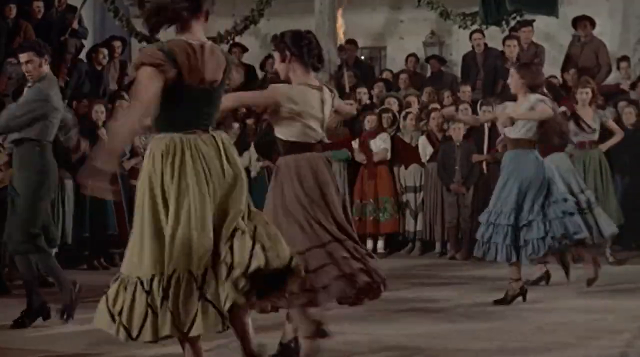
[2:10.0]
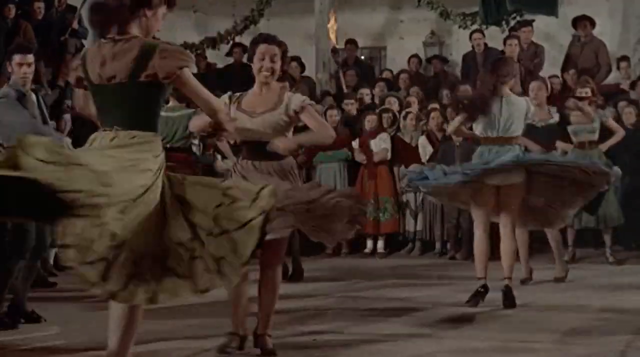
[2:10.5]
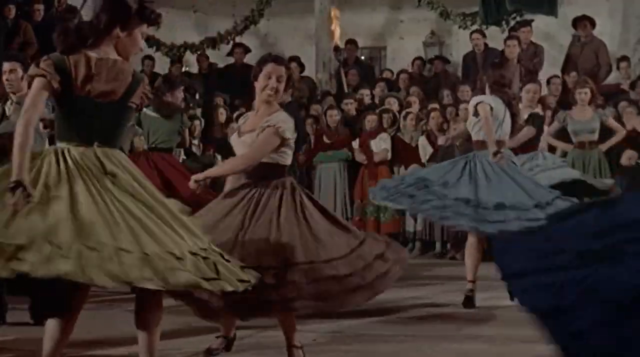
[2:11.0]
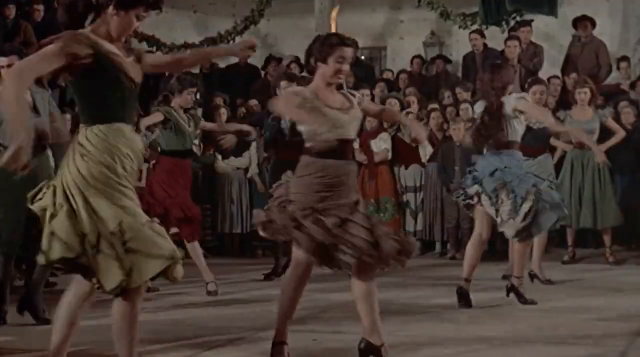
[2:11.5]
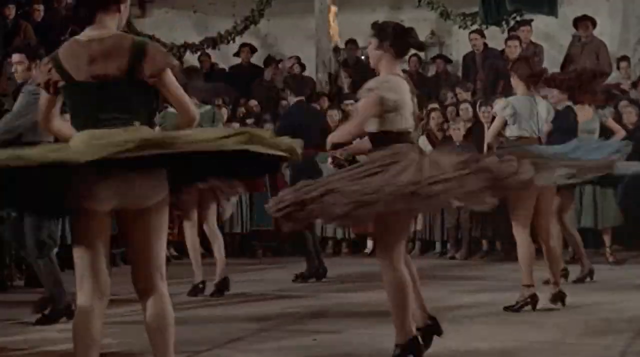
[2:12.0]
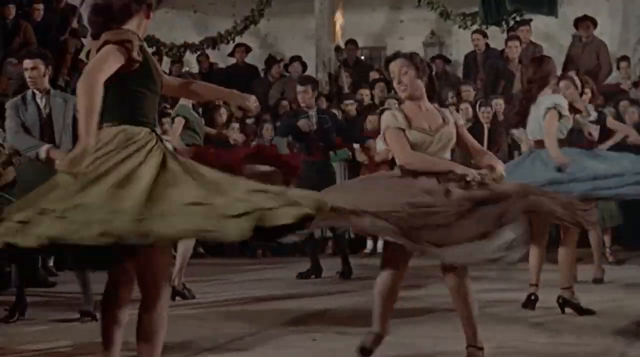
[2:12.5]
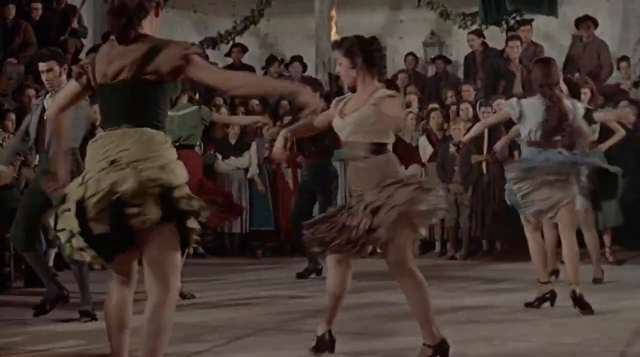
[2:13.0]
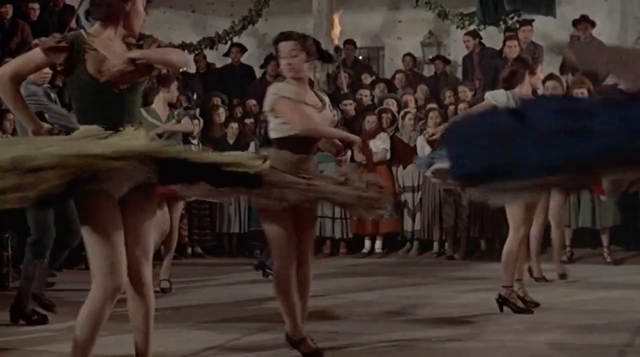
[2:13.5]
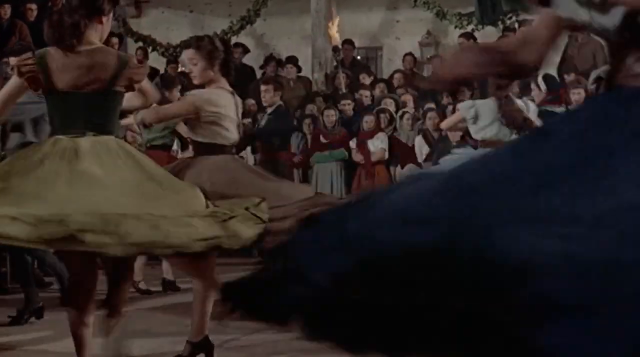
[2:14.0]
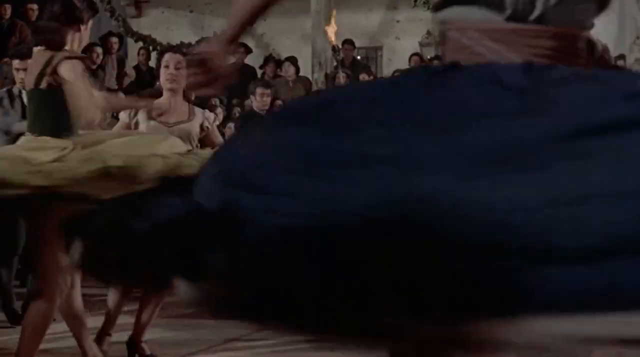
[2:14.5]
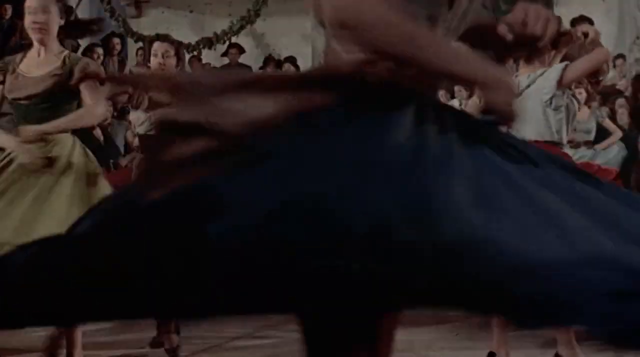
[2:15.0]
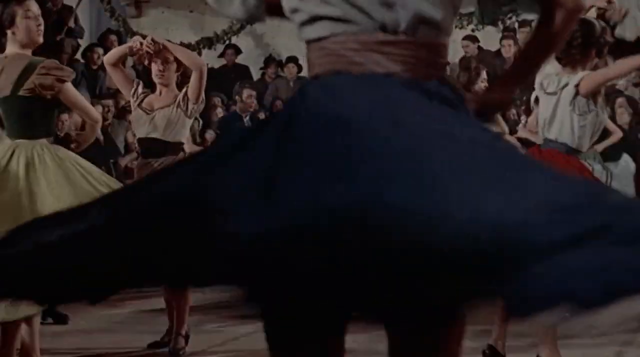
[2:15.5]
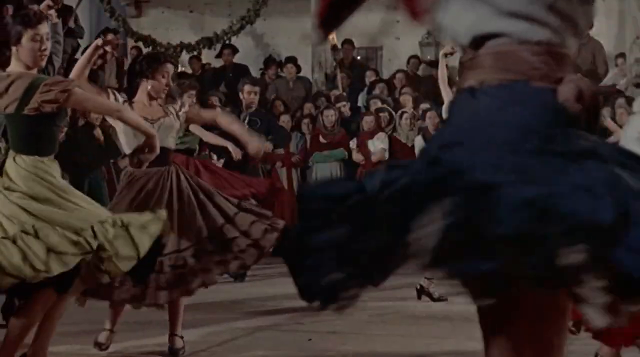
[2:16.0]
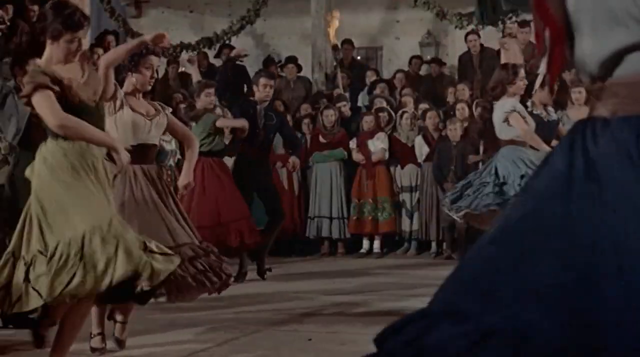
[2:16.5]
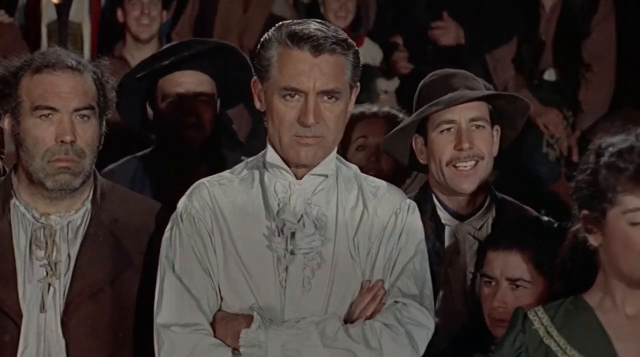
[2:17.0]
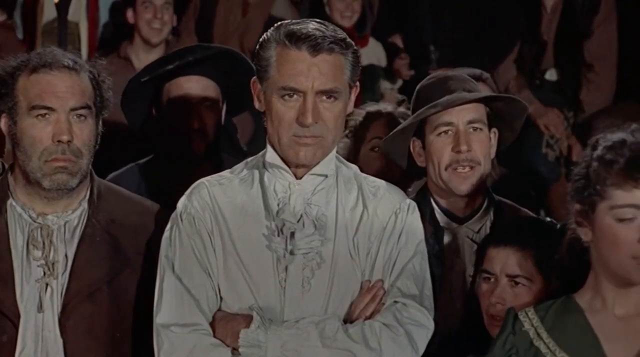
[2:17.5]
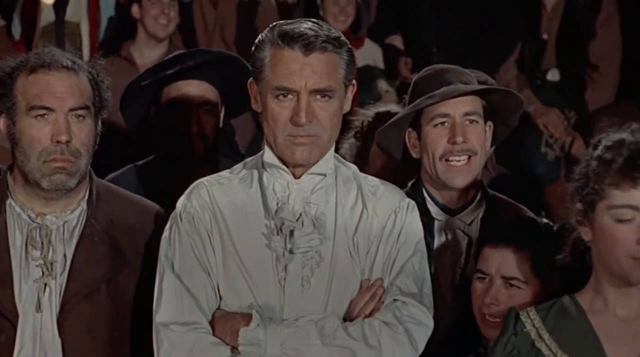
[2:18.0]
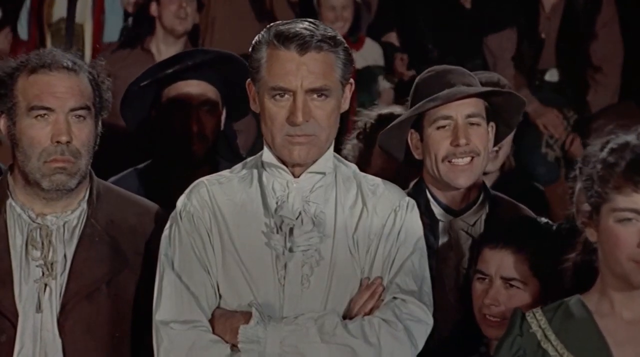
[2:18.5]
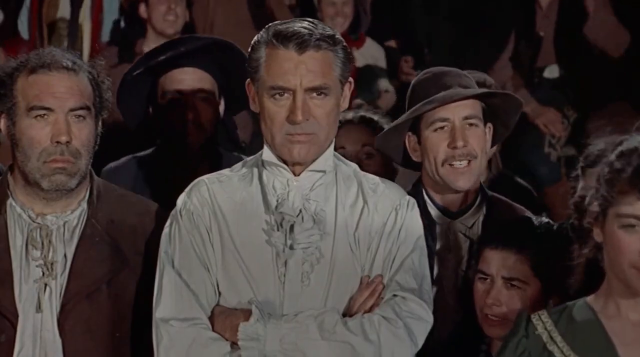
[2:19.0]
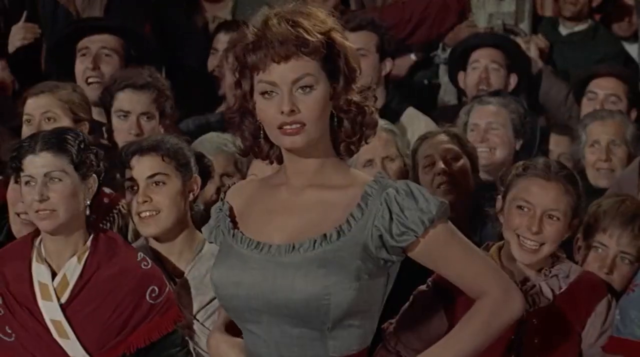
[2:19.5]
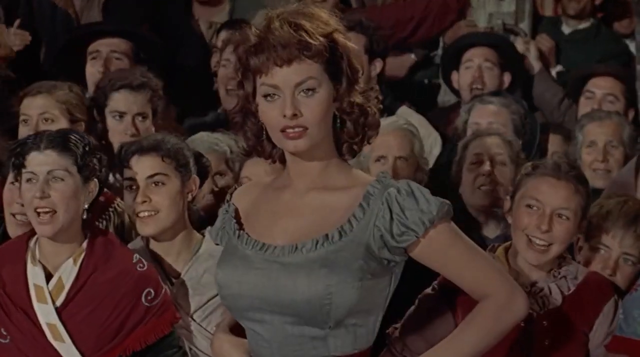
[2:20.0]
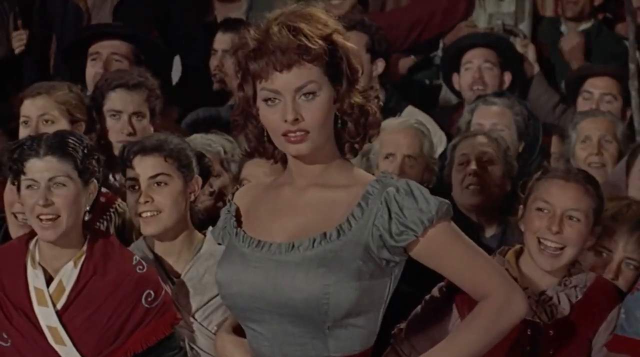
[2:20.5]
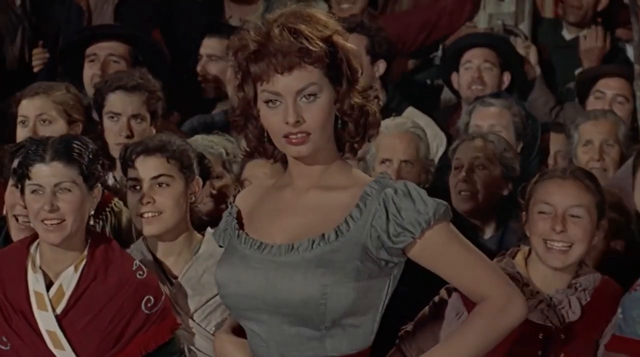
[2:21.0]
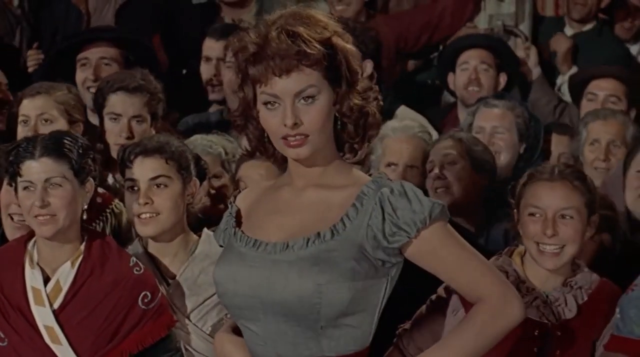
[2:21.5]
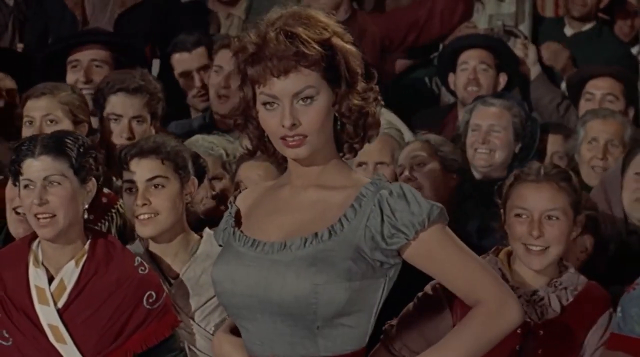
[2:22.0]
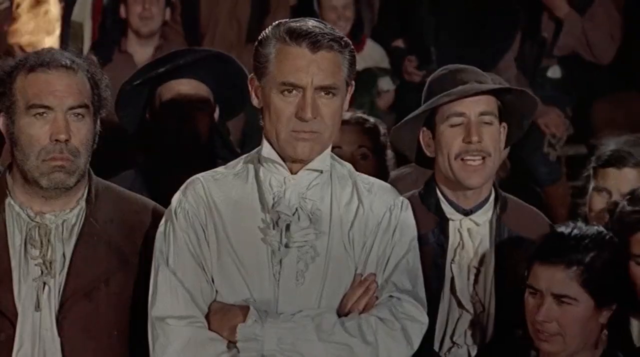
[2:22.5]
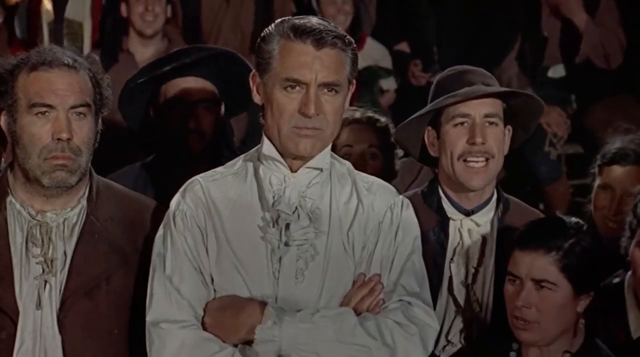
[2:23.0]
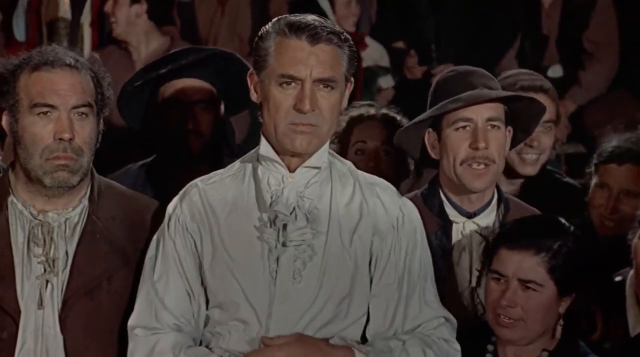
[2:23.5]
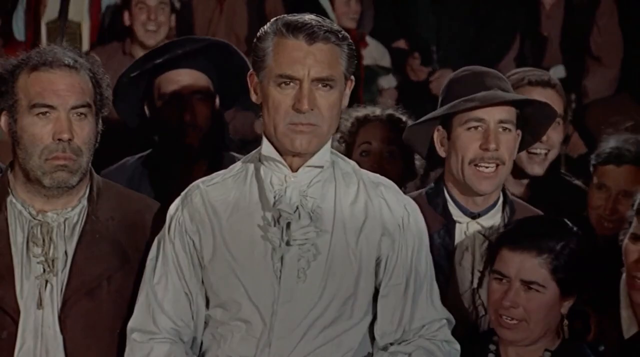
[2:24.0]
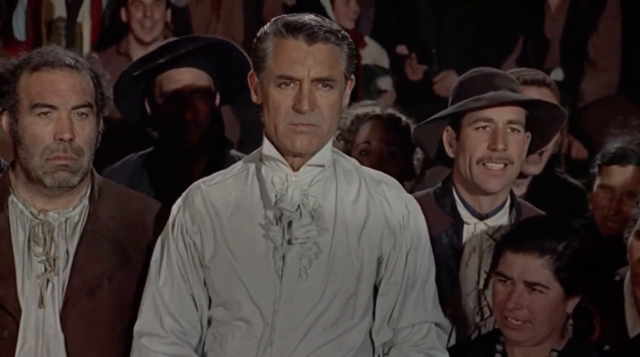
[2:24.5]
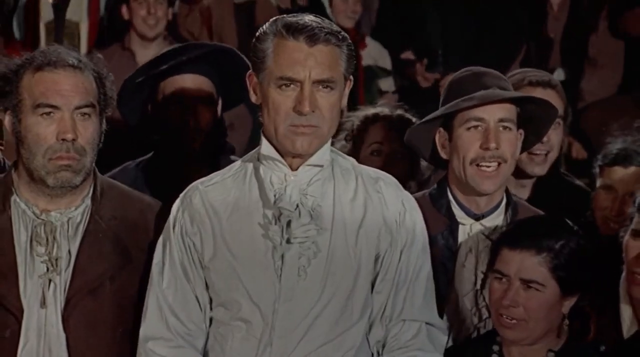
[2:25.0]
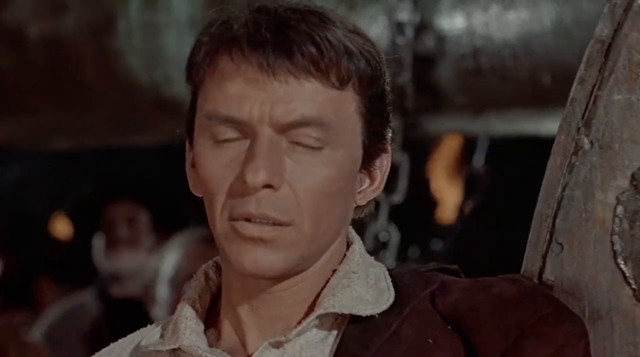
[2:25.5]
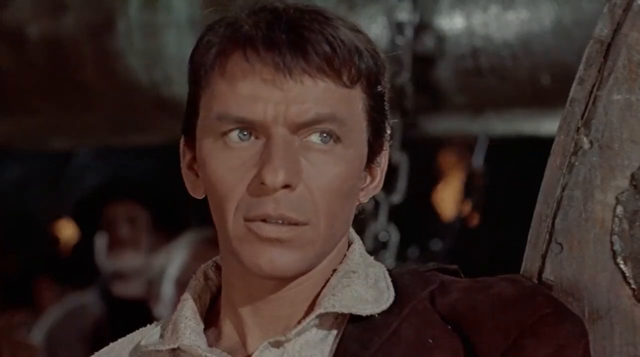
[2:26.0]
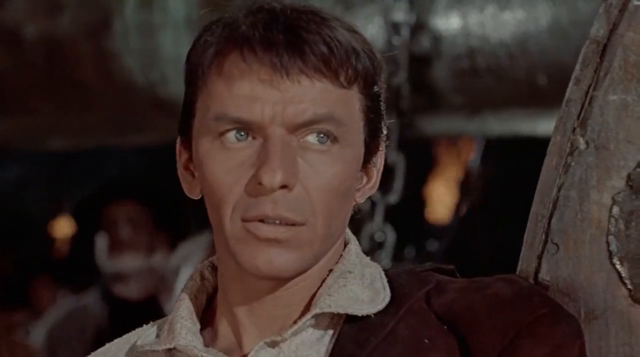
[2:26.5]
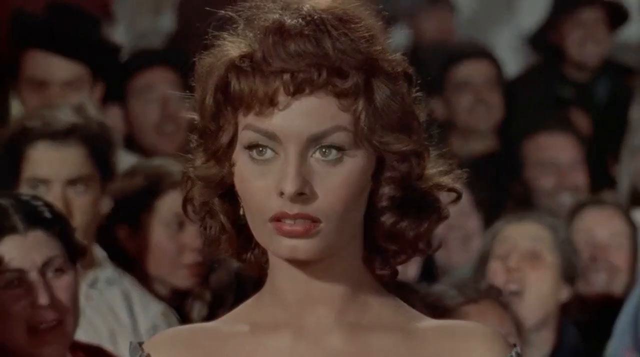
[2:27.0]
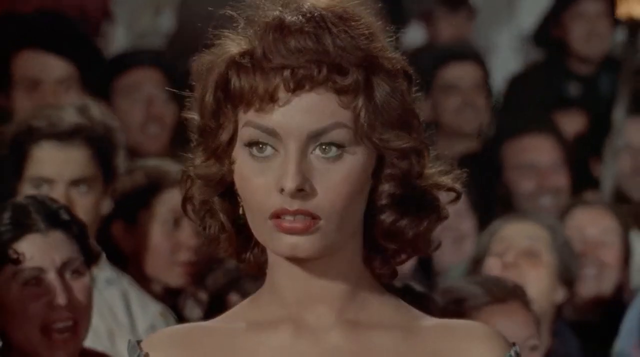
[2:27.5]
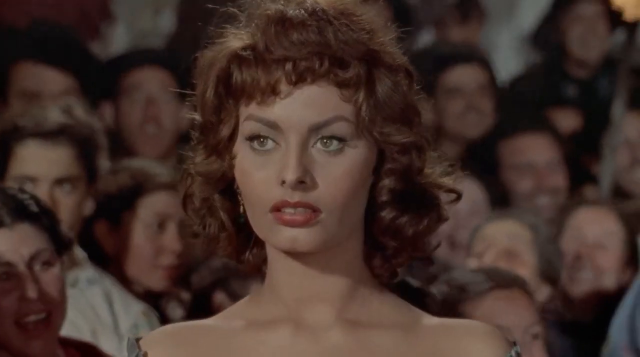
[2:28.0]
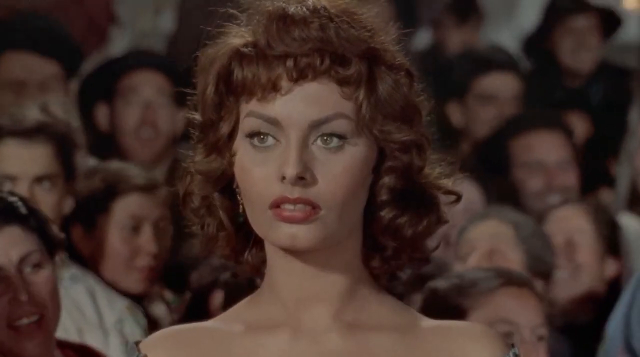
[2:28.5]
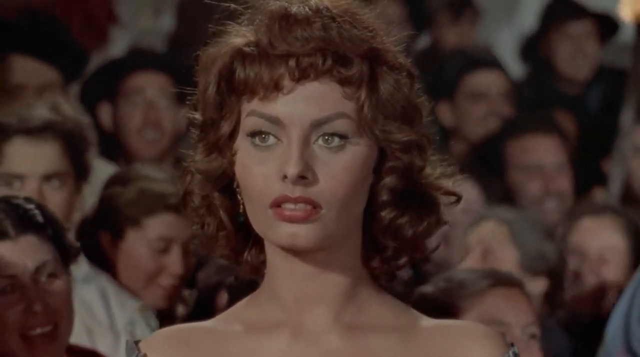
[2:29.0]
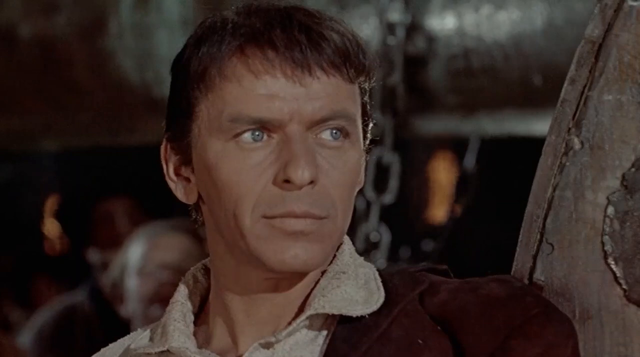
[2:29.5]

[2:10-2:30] The girls dance, spinning around, their skirts flying up as they spin, and they all seem to be having a good time. They all seem to be doing the same dance, though they wear different dresses, and they may be people from the audience. The shot then cuts to the man in the white shirt, who looks quite sternly at the woman, and she appears to be staring back at him. They share lingering gazes; although their faces are quite stern, it seems meant to be flirtatious. The camera then goes to her partner, who looks fuming.